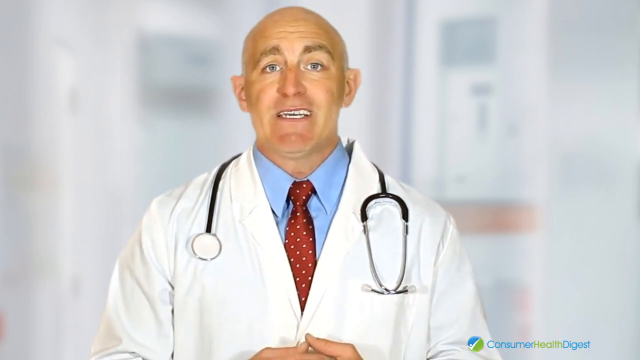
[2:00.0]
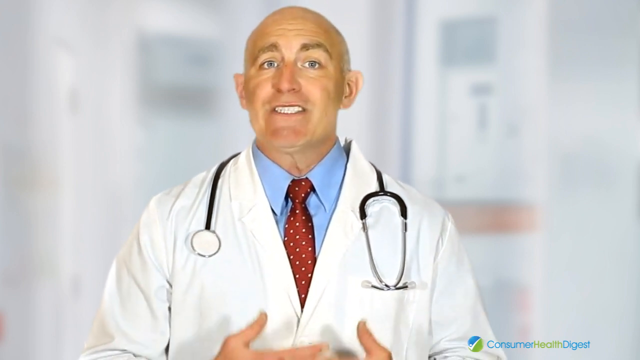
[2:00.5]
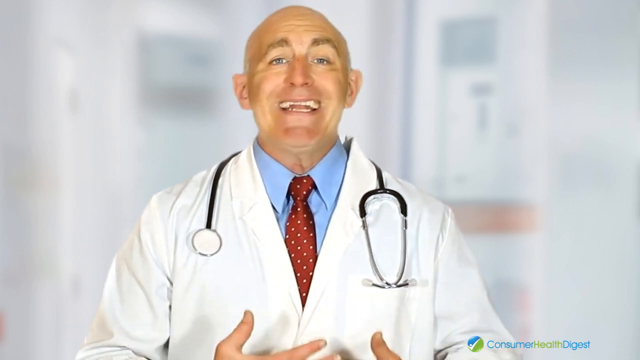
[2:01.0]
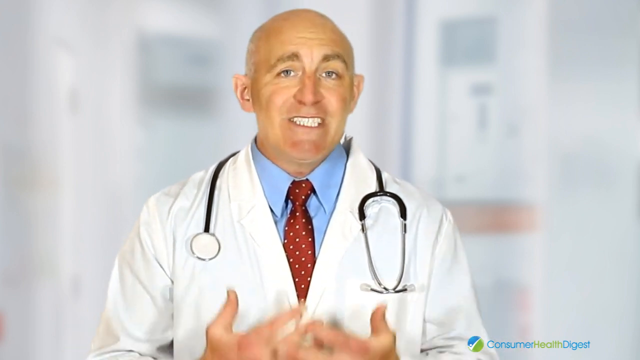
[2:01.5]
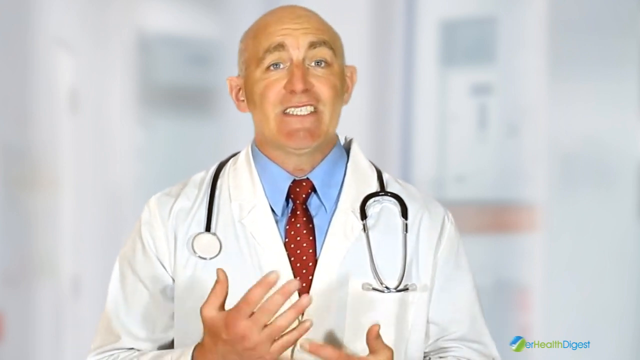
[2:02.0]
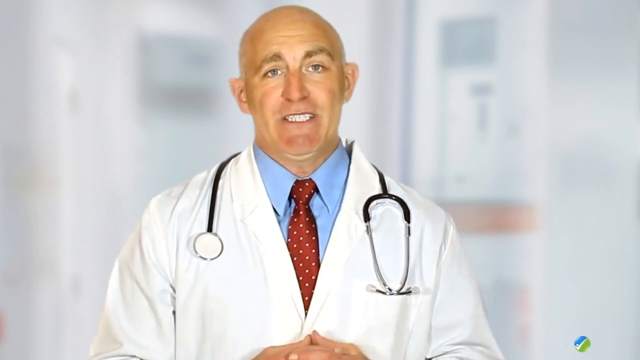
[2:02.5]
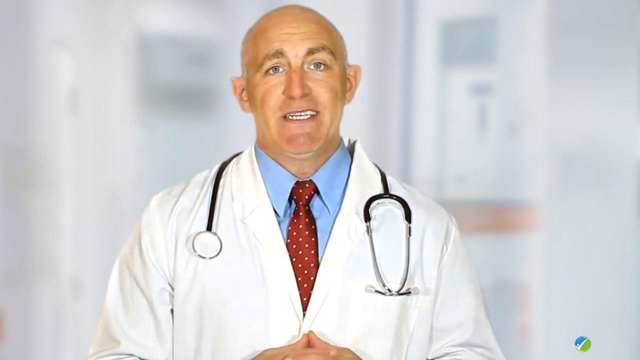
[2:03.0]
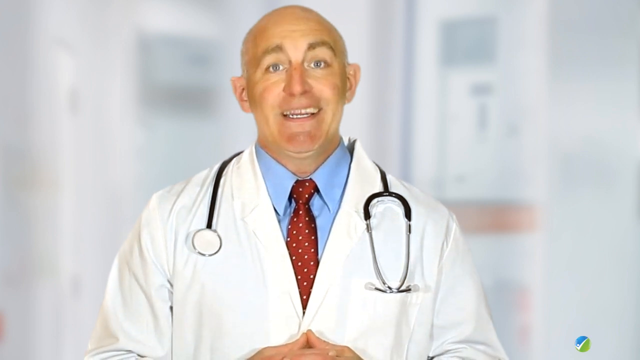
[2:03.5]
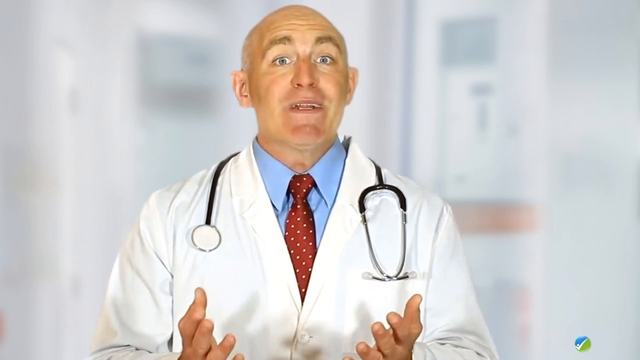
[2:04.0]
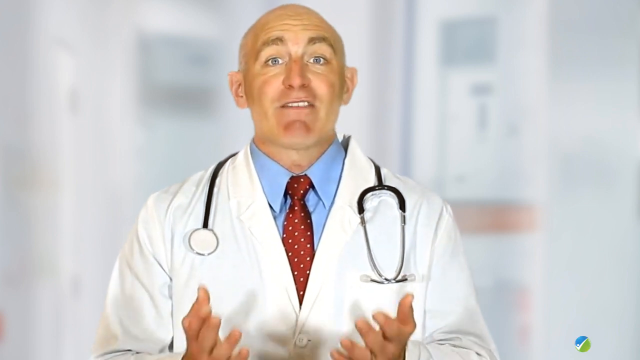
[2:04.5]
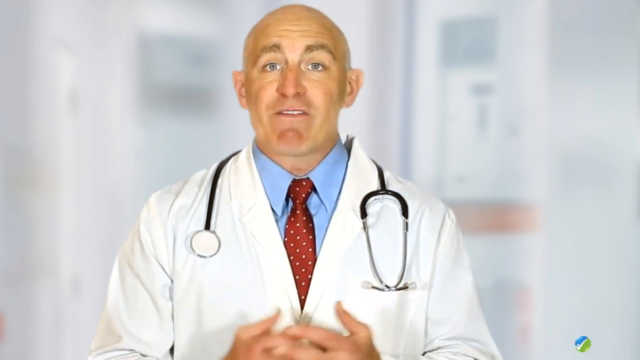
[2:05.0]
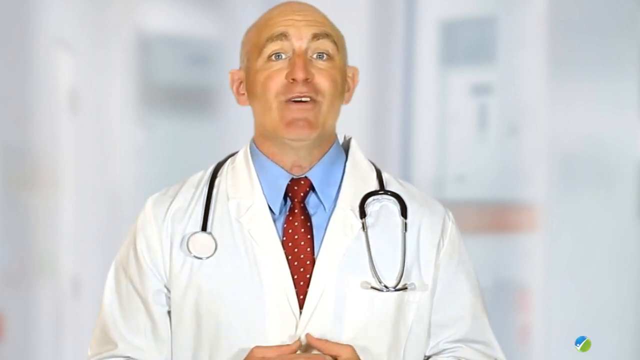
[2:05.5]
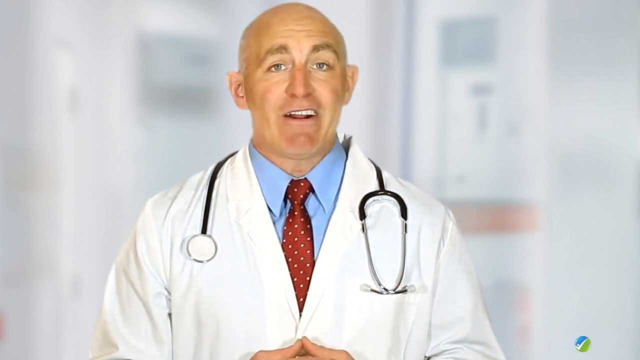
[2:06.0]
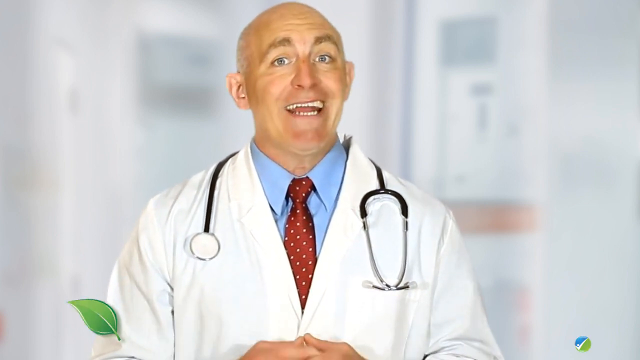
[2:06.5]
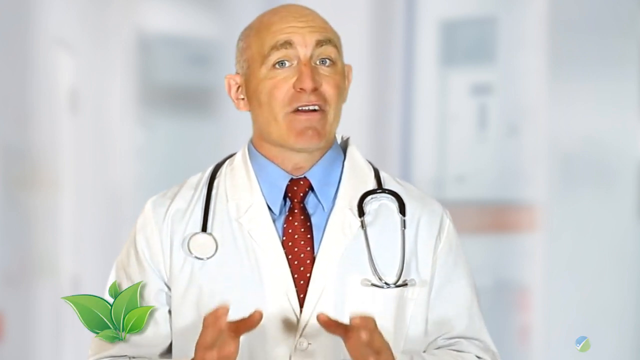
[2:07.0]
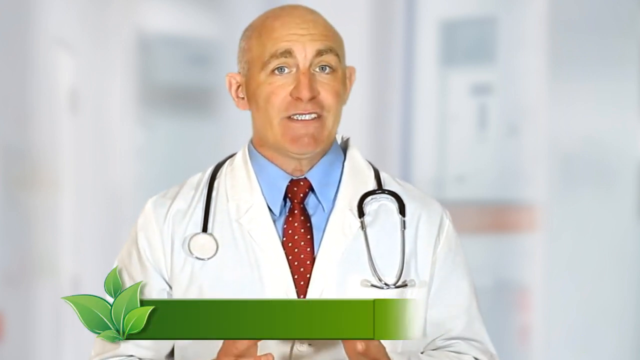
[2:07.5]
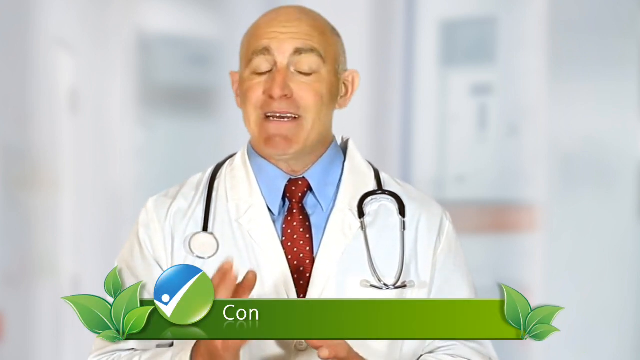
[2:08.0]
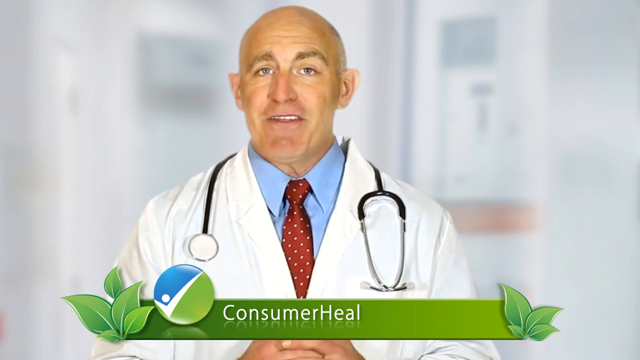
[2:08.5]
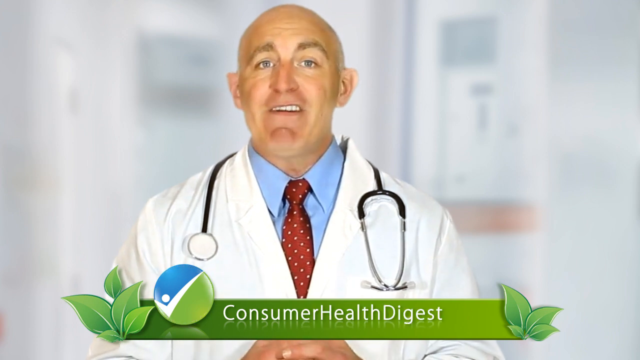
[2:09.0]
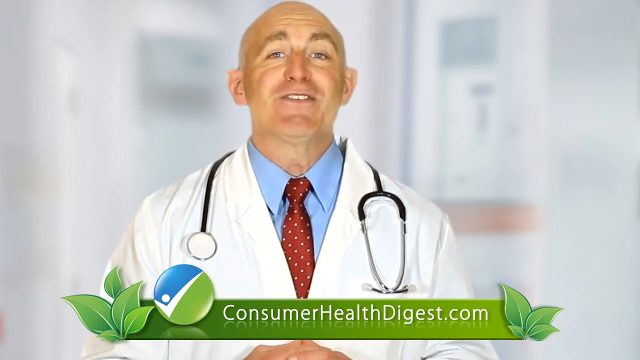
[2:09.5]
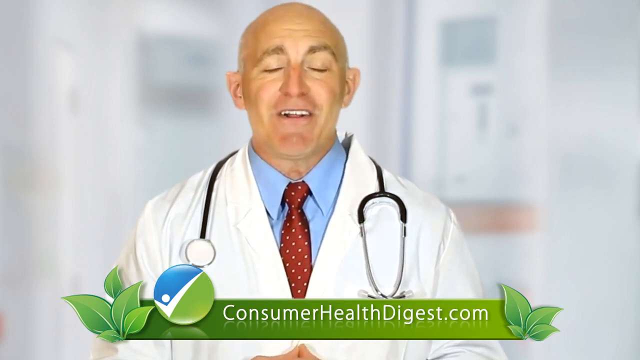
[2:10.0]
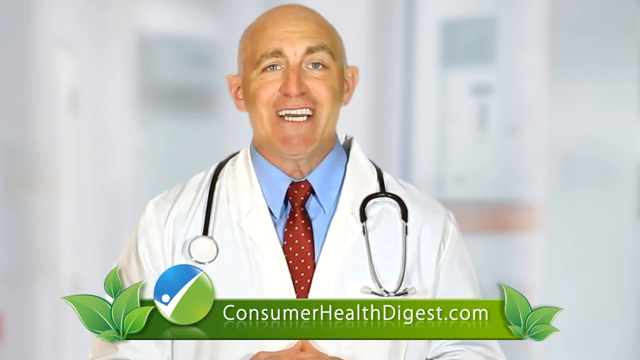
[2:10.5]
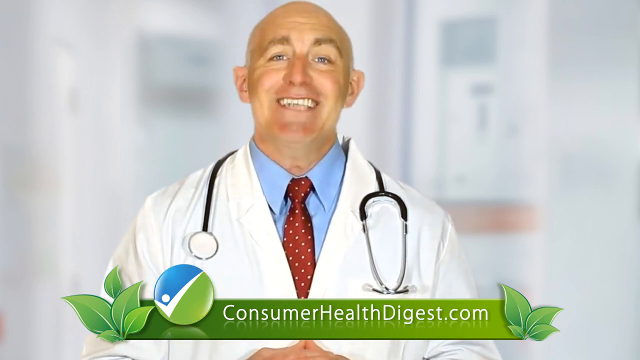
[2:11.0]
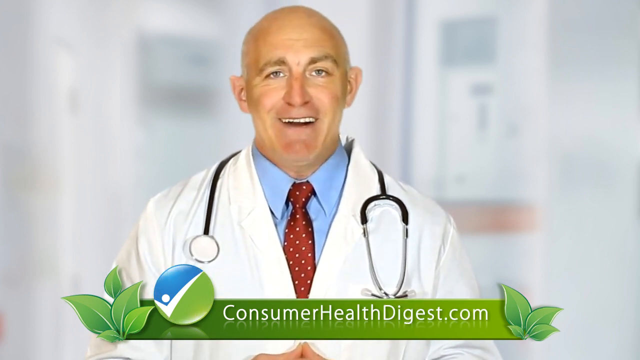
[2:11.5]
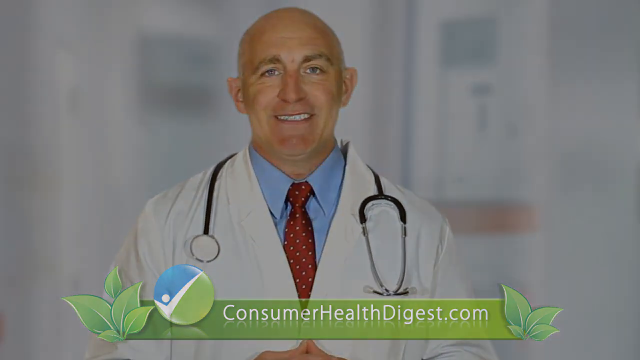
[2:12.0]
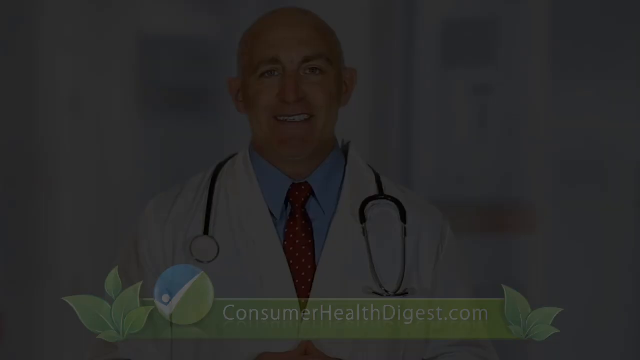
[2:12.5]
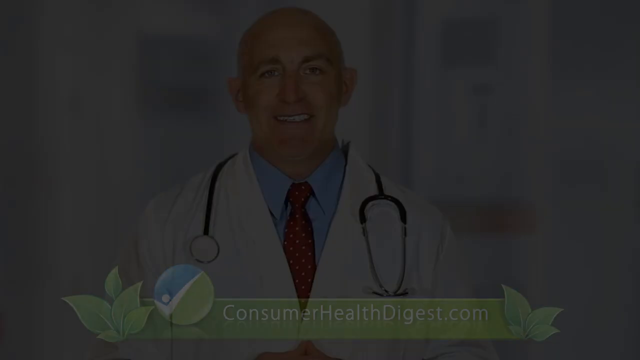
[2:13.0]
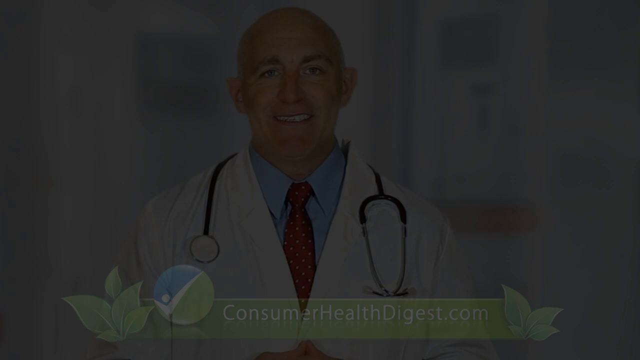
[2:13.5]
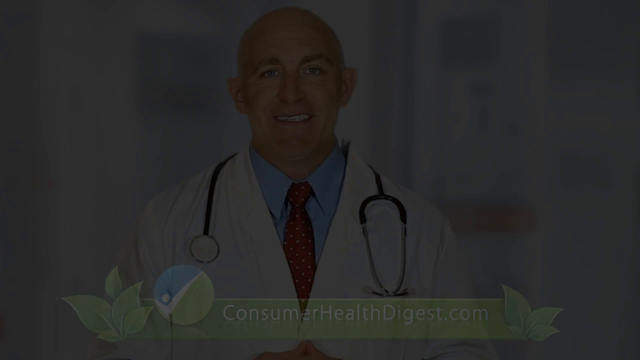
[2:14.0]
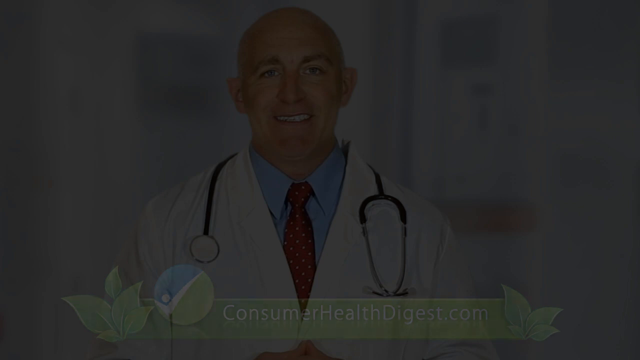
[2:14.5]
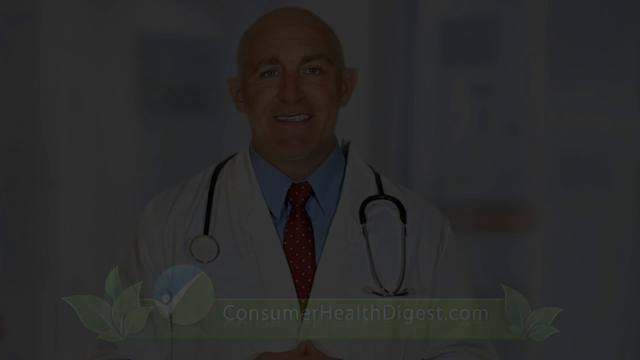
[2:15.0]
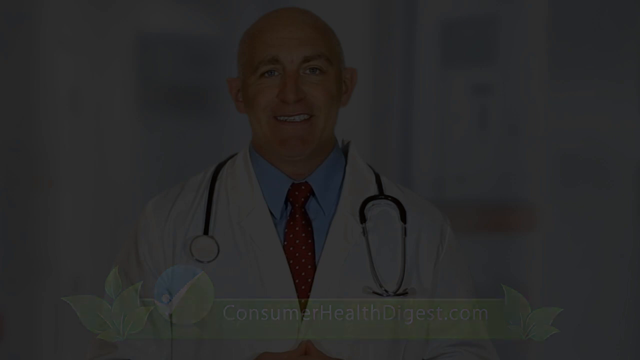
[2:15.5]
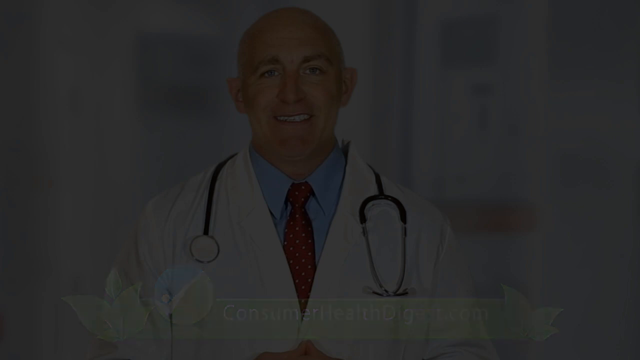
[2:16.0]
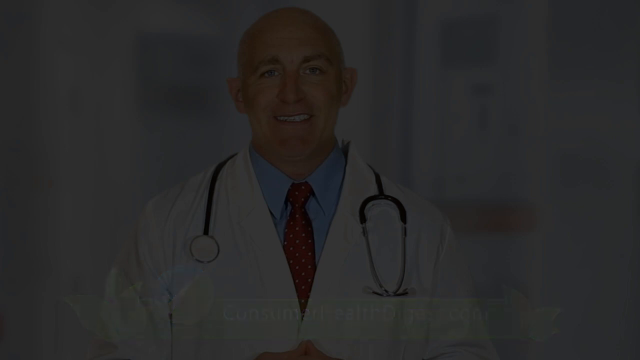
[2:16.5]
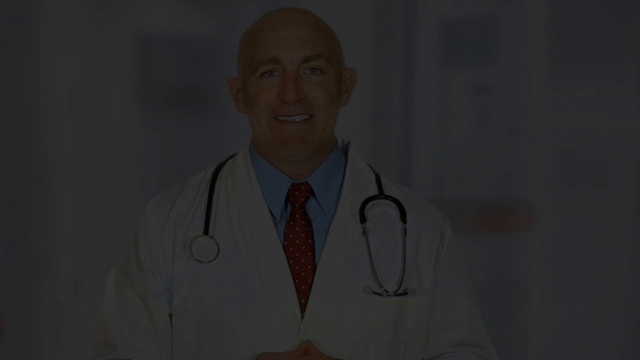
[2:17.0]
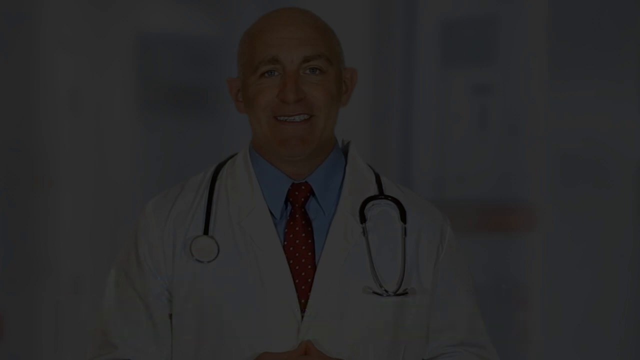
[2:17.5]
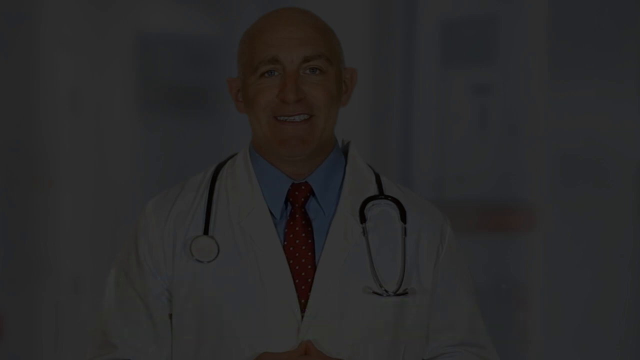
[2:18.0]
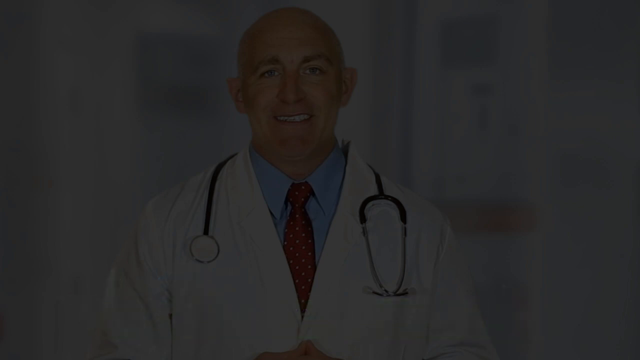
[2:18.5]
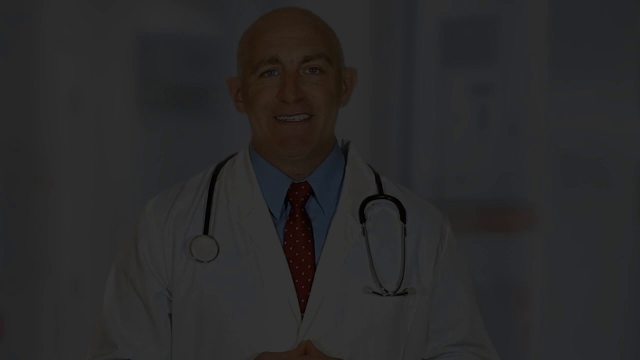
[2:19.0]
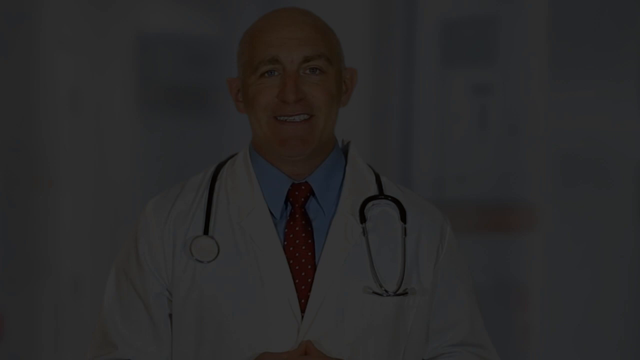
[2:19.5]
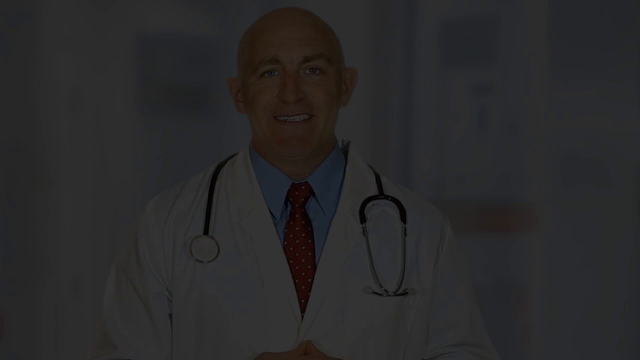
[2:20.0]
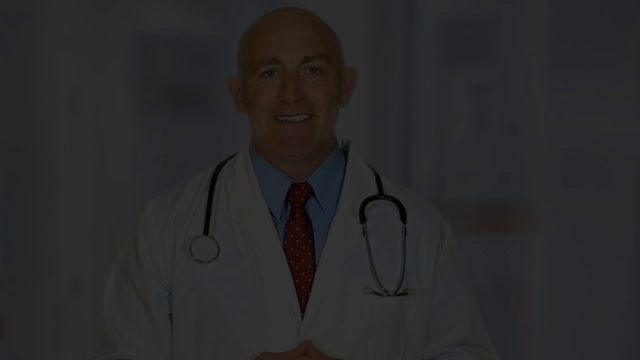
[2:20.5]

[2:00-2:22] The doctor continues talking as the consumerhealthdigest.com logo comes up across a green banner at the bottom of the screen. The logo shows the circle with a white check mark, blue above the check mark and green below it, with a white circle right above the angle of the check mark. The doctor is still an older white man with a bald head, wearing a blue button-down shirt, a red tie with white dots, a lab coat, and a stethoscope. The video then fades out, and nothing else happens for roughly the last 12 seconds before it ends.